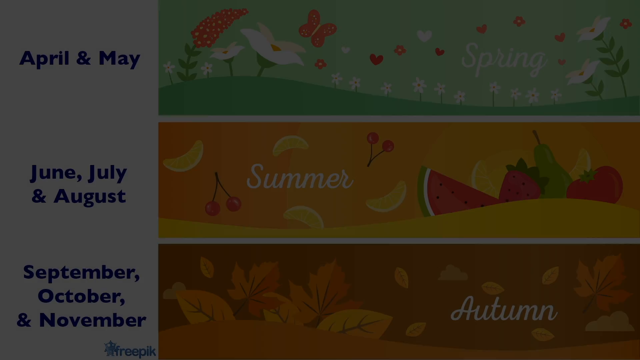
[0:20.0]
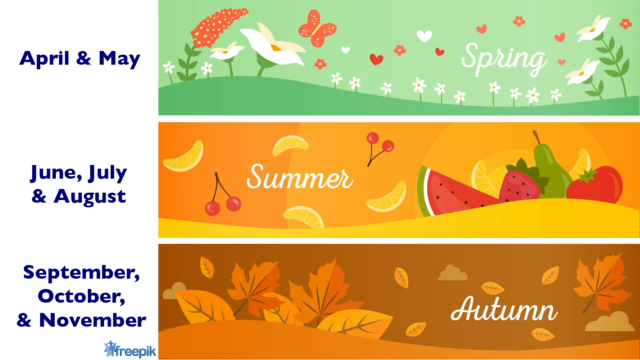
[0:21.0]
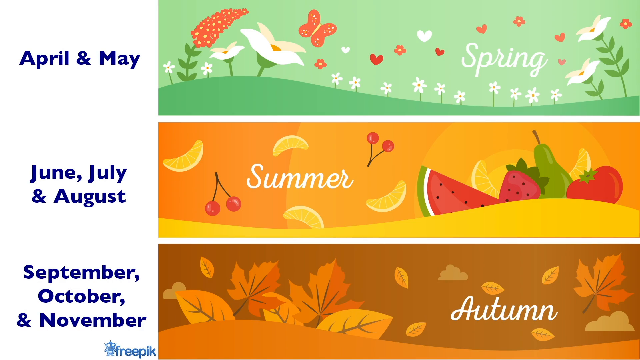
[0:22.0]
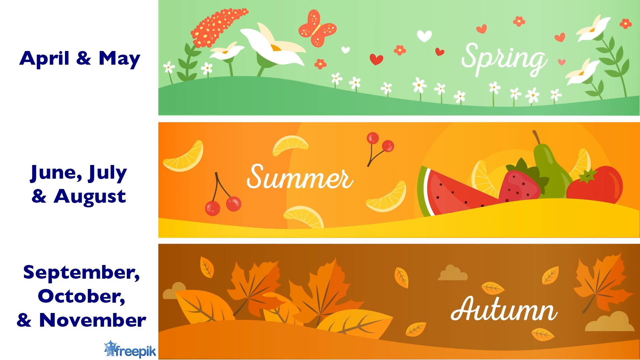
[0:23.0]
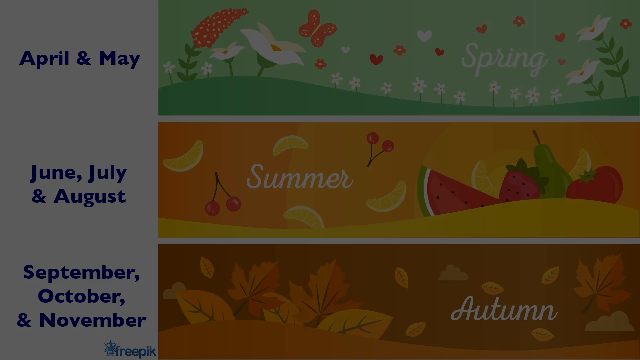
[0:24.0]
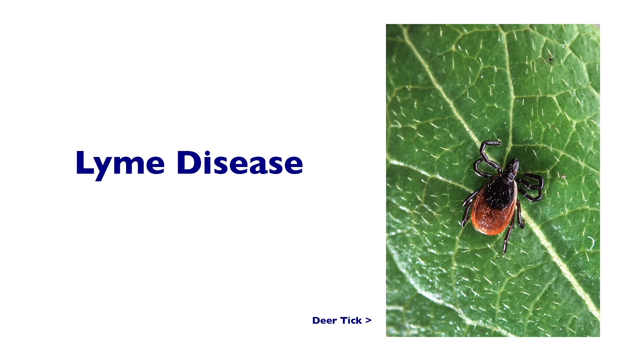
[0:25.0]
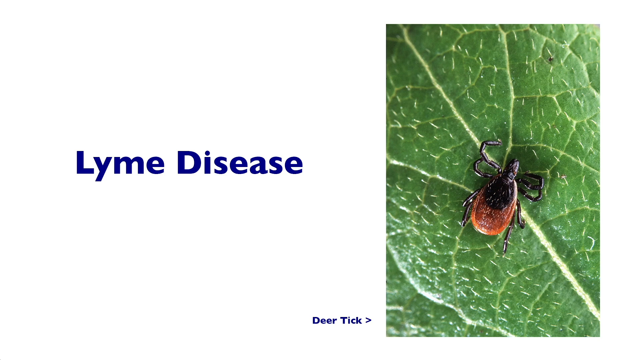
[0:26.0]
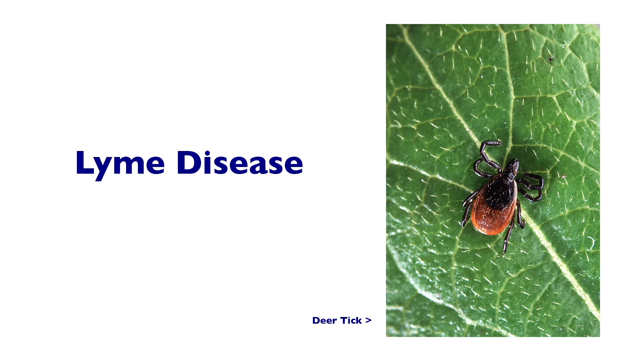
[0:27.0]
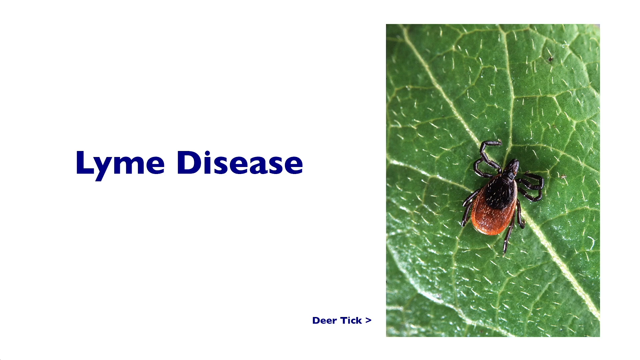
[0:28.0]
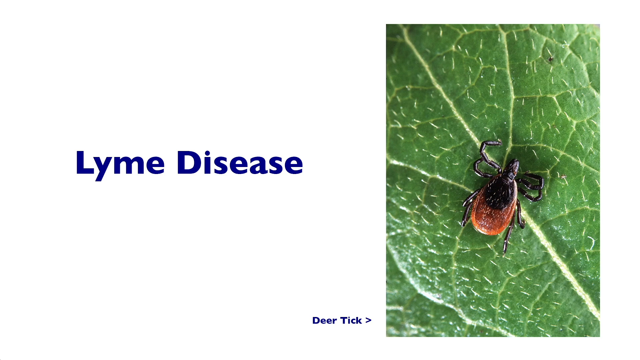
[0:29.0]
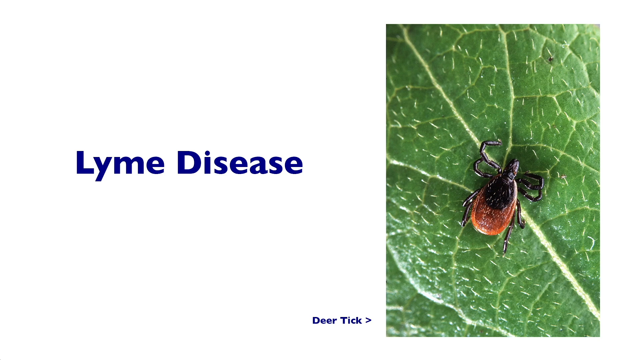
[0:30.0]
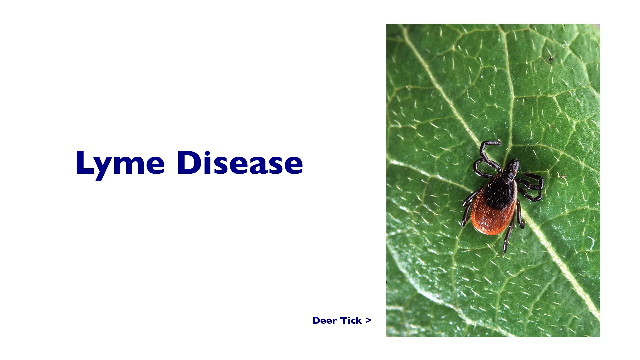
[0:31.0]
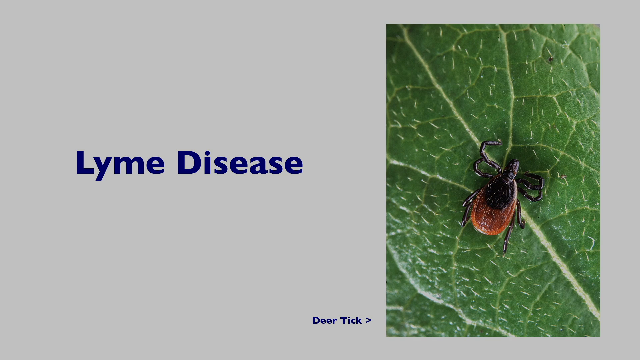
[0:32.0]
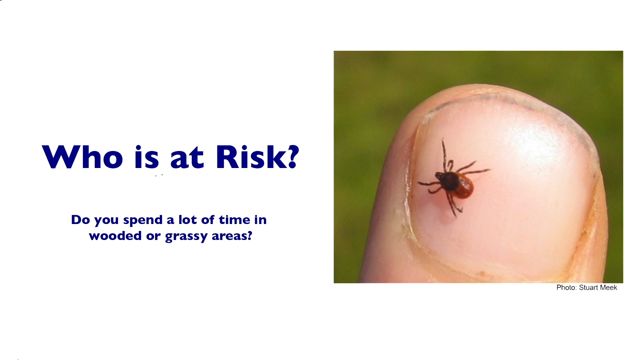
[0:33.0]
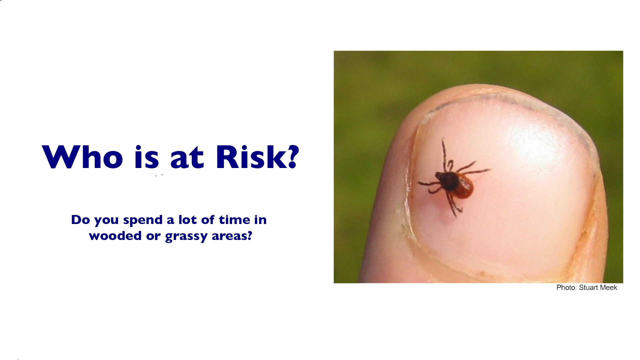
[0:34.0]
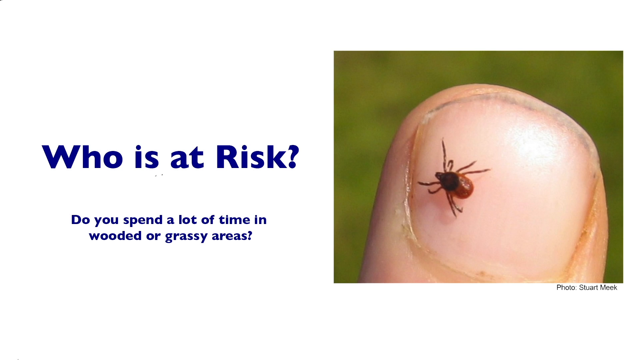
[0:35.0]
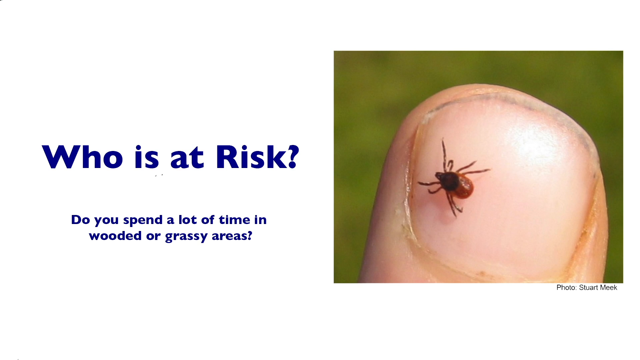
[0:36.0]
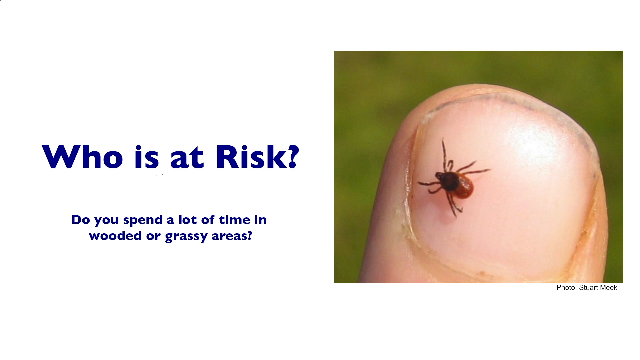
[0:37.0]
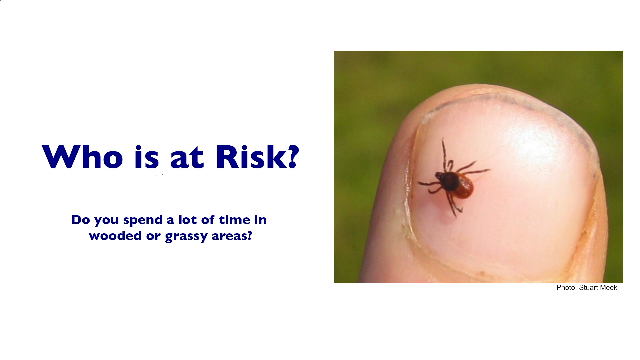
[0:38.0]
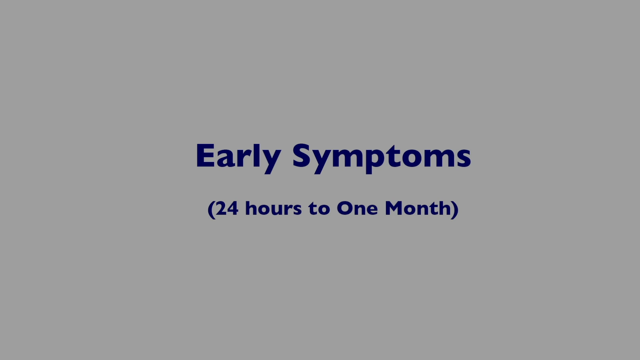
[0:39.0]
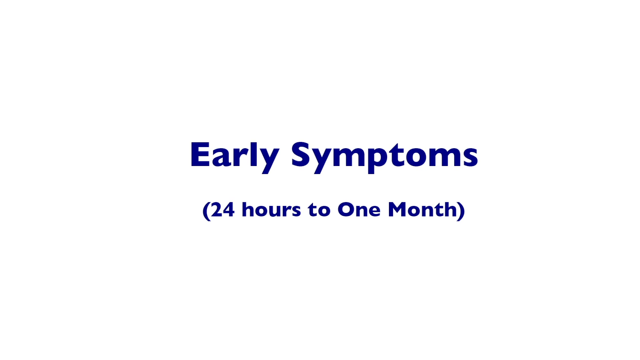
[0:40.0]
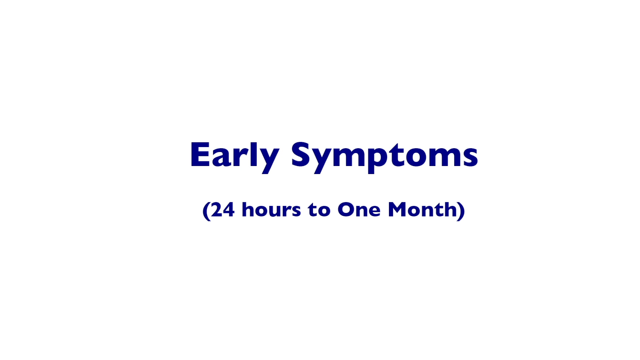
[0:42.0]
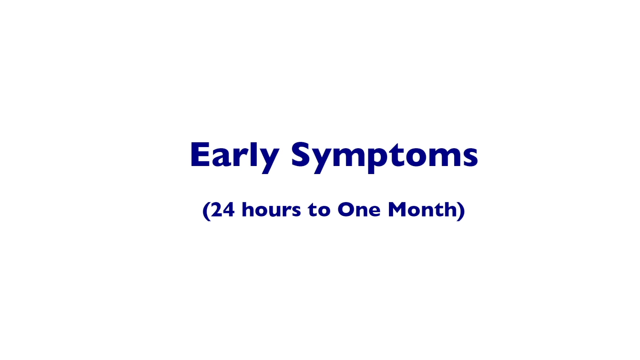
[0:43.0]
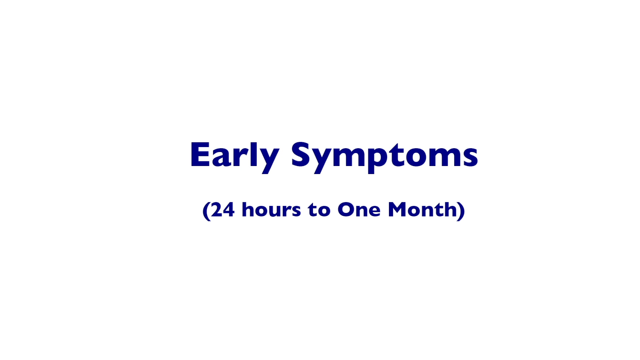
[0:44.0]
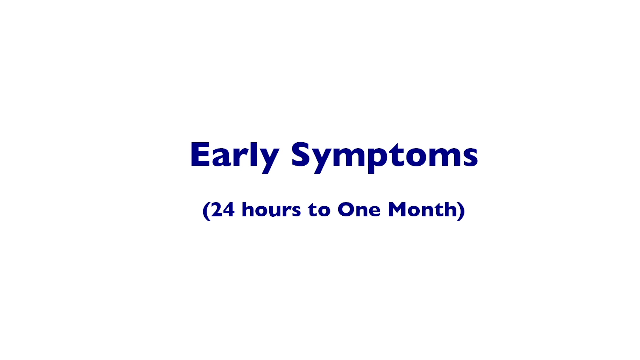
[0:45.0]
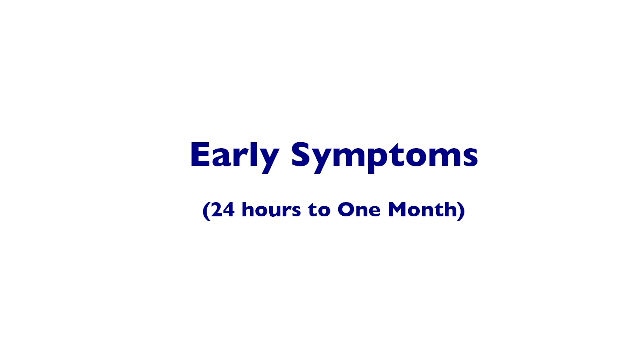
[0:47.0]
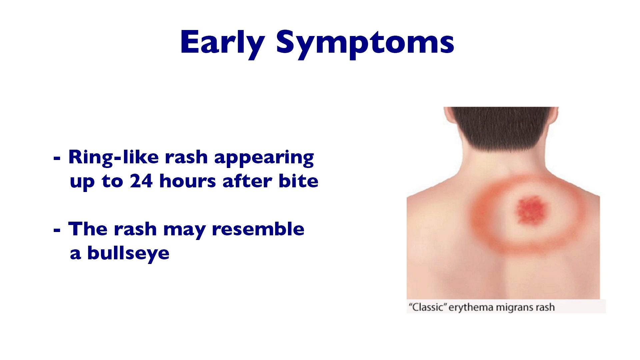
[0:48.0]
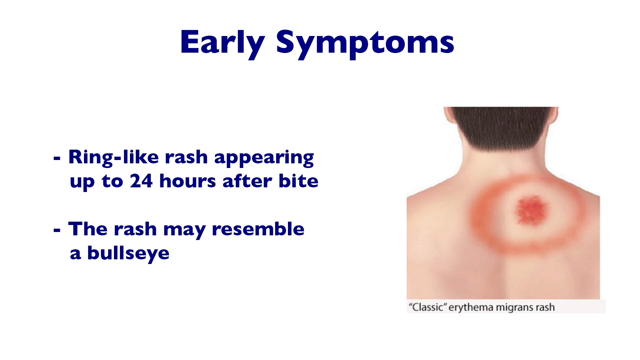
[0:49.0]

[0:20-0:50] Three designs relating to the seasons are shown. The top one is spring: a green background with white flowers and butterflies, with "April" and "May" to the left. The middle one is summer: an orange and yellow background with slices of lemon, cherries and fruit, with "June, July, and August" to the left. Below that, "September, October, and November" appears to the right on an autumn design with a mostly brown background and orange, red and yellow leaves. This screen stays for a couple of seconds. The next image shows a tick on a leaf on the right-hand side, with "Lyme disease" on a white background on the left. The next screen reads "who is at risk? Do you spend a lot of time in wooded or grassy areas?" with an image of a tick on a thumbnail on the right-hand side. The following screen says "early symptoms, 24 hours to one month" on a white background.